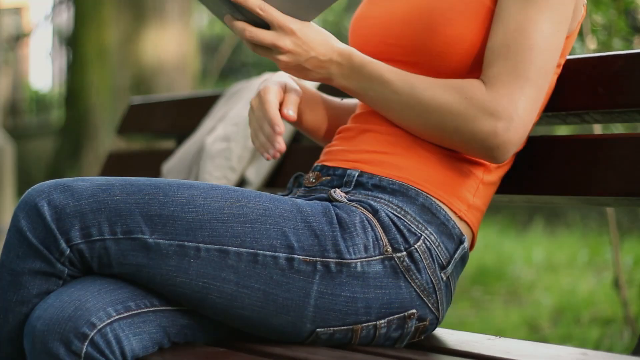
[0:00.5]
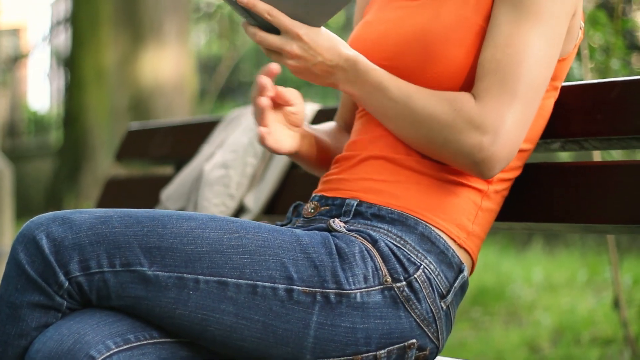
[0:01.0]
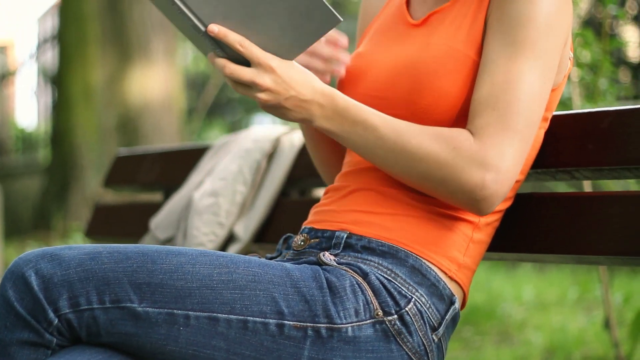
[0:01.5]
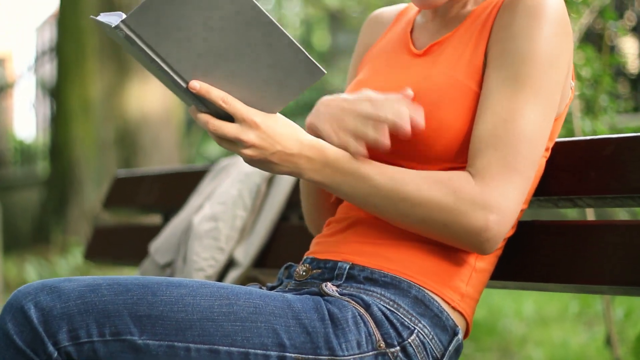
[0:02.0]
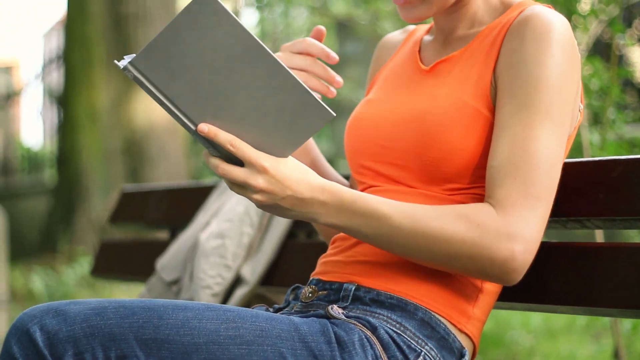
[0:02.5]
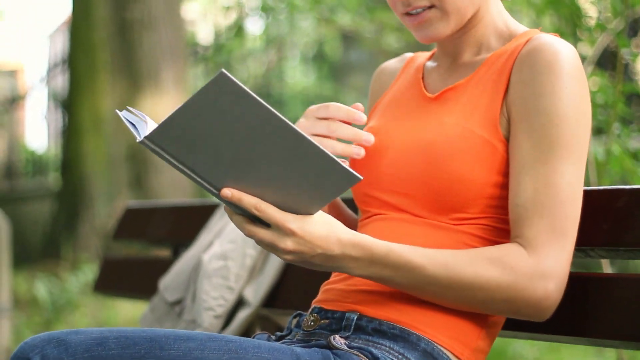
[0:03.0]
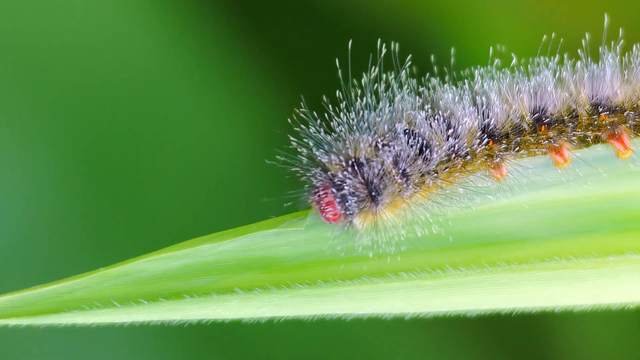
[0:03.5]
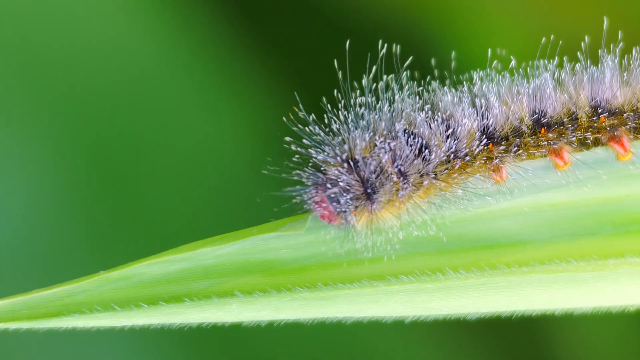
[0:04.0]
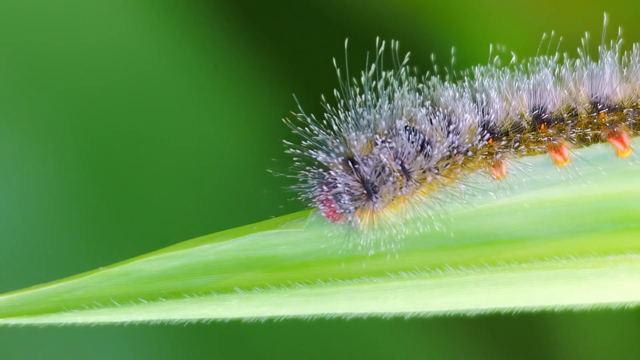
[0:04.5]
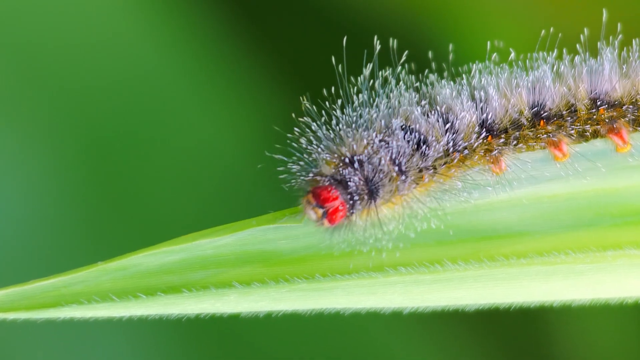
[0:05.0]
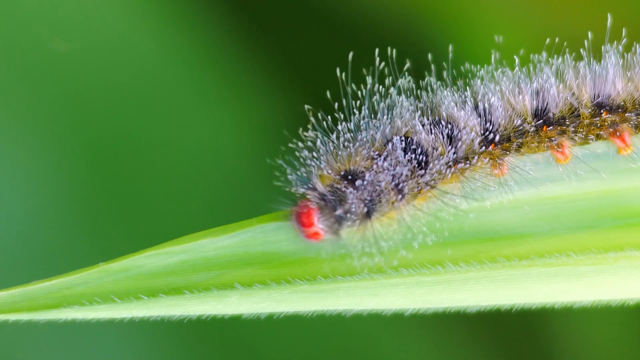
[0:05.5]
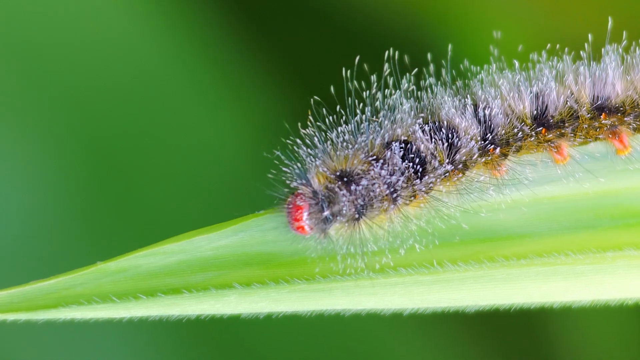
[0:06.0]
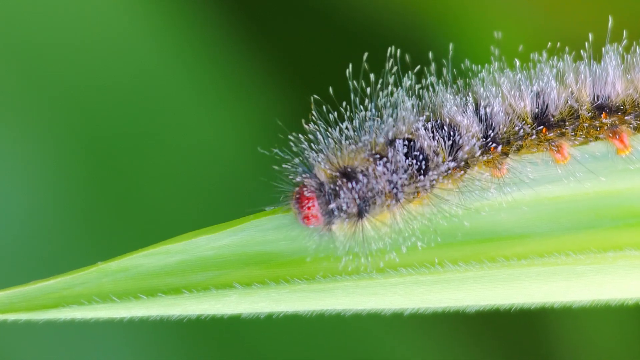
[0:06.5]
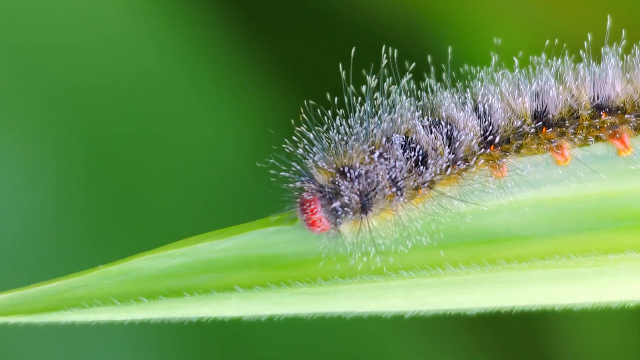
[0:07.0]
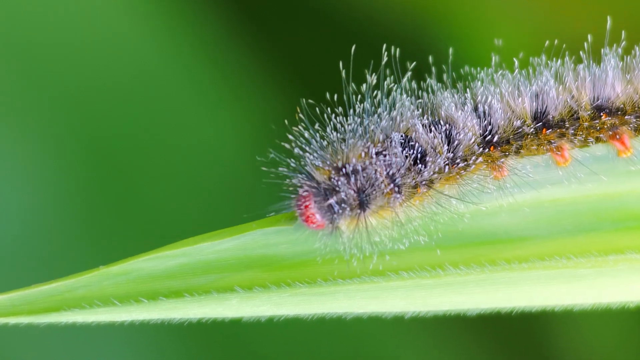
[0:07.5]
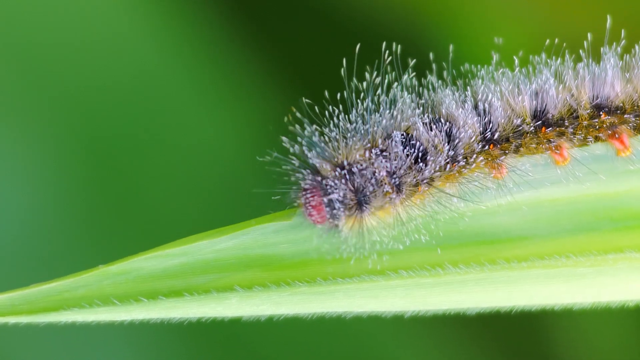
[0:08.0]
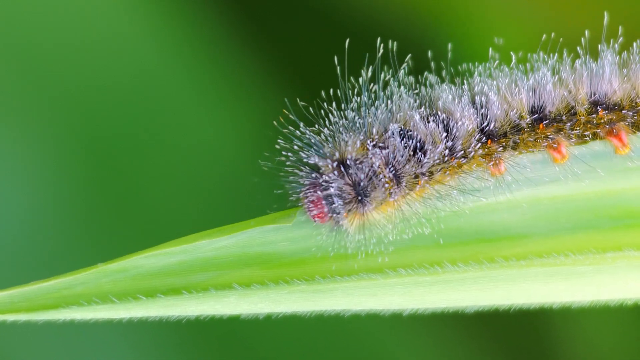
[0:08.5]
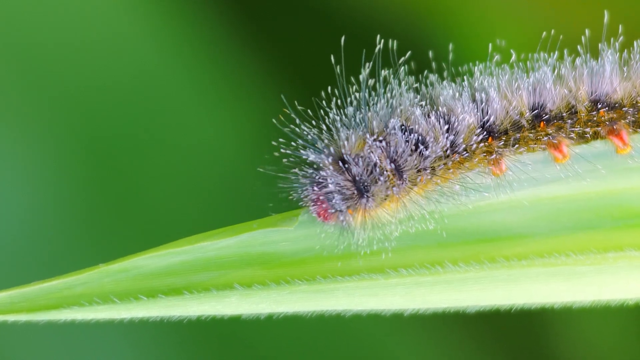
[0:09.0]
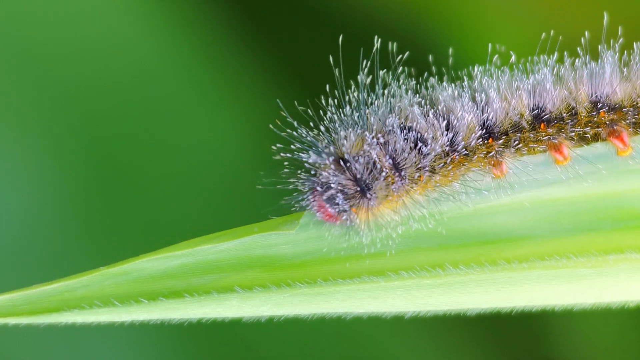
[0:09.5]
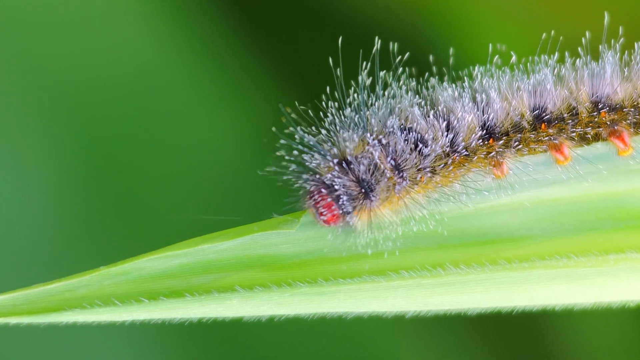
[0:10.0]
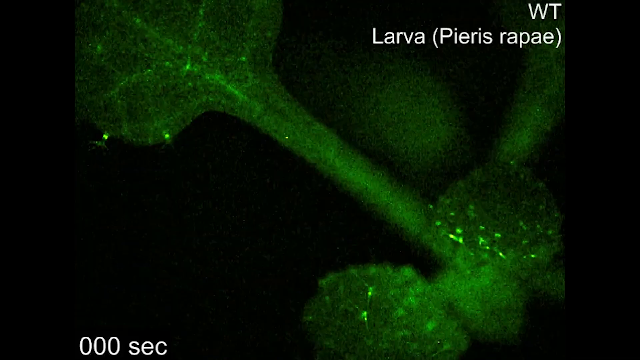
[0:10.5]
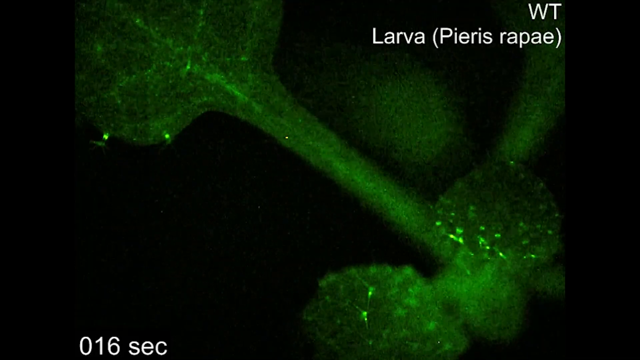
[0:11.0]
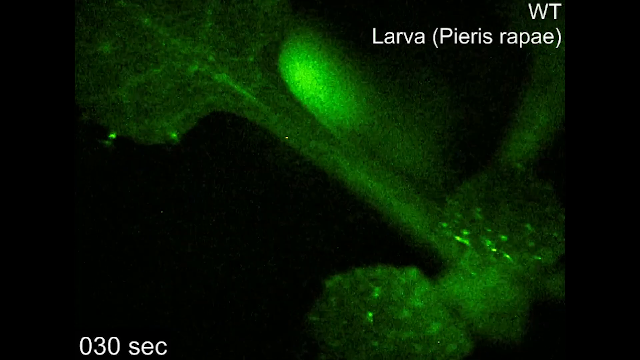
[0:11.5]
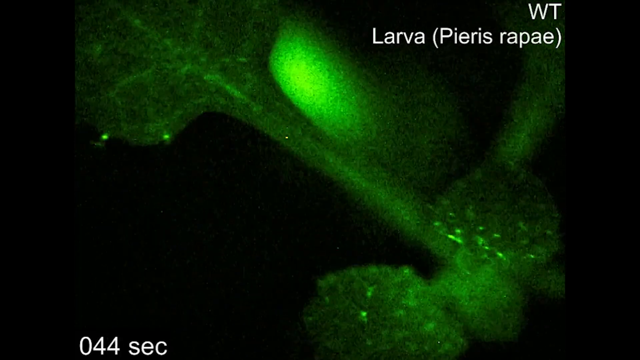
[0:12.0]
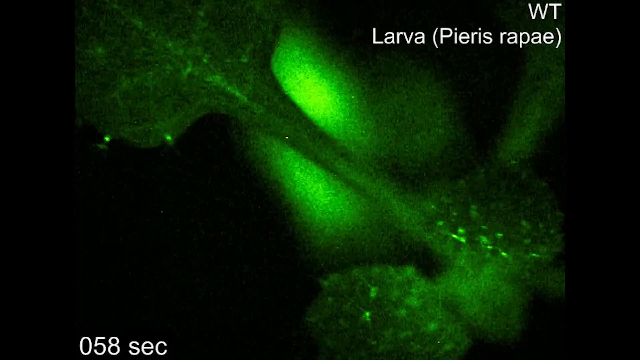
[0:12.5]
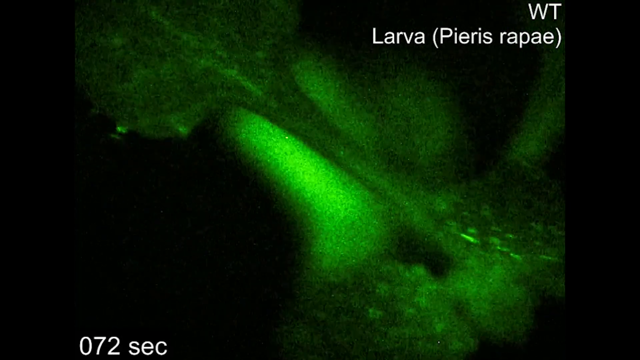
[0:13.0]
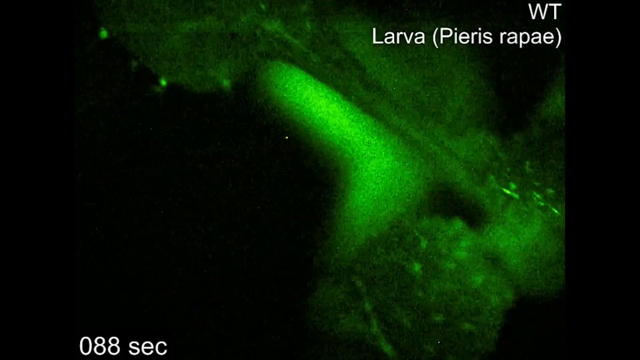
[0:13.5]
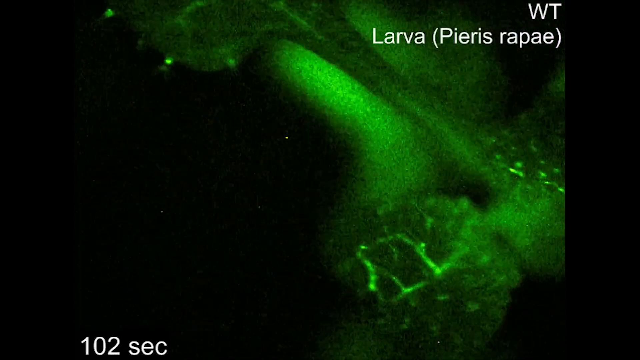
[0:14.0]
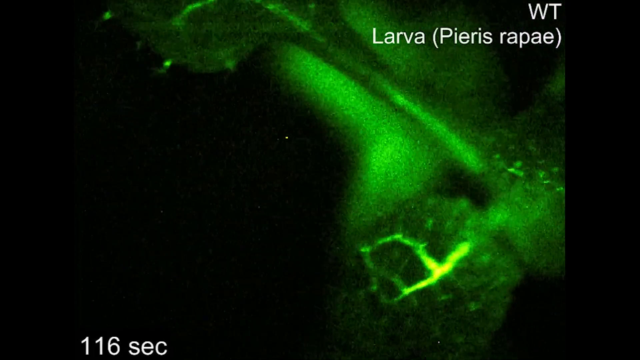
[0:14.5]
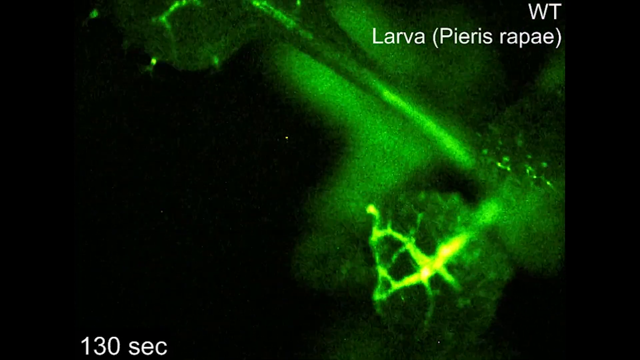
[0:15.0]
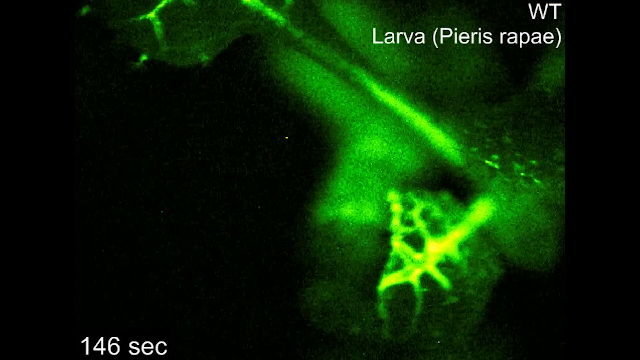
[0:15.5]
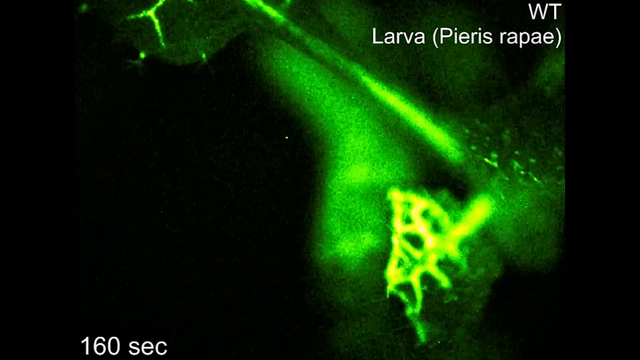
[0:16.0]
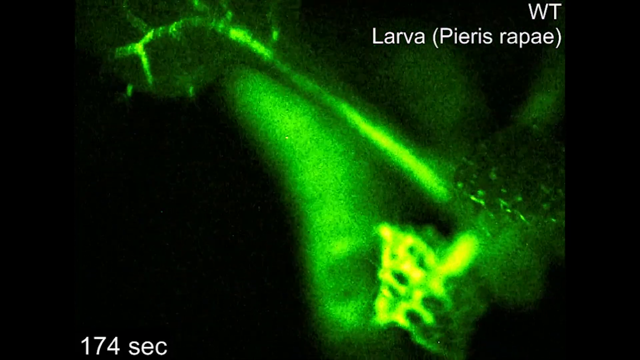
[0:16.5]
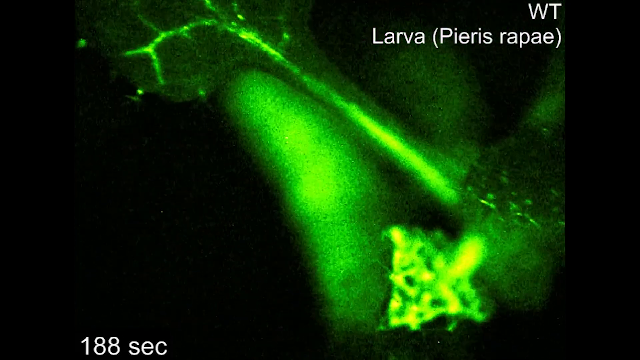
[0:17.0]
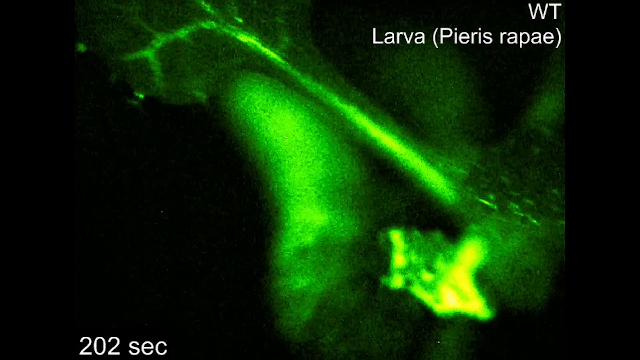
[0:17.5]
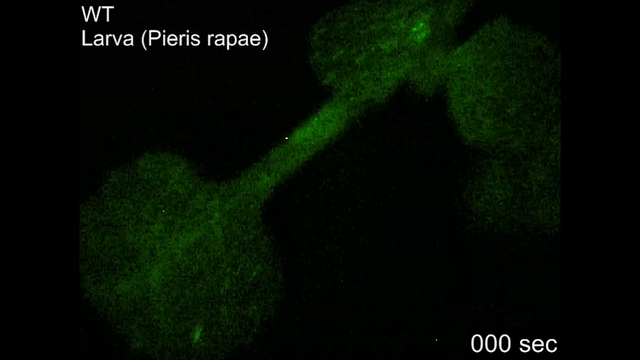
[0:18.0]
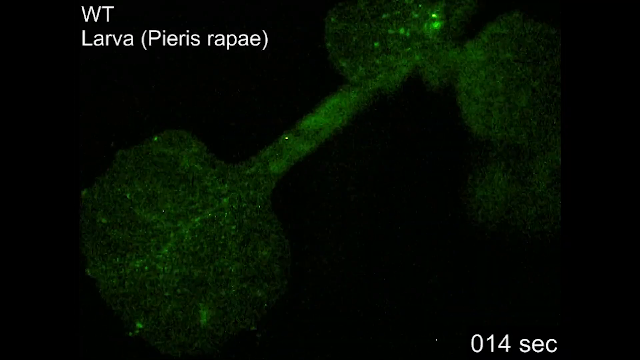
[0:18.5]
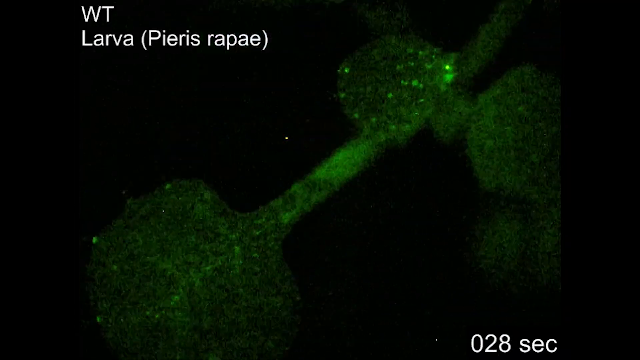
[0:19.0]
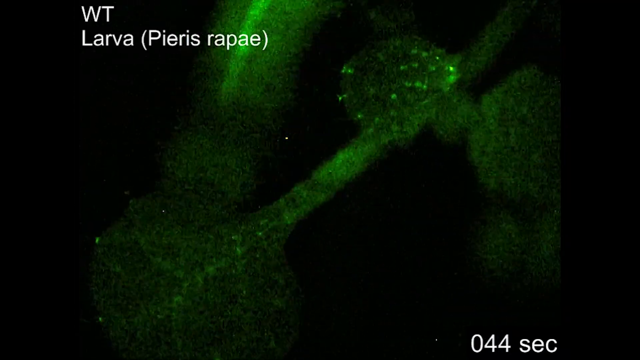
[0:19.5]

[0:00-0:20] The video features a woman, a caterpillar, and what appears to be a caterpillar larva. The woman has an athletic build and wears an orange tank top and blue jeans; she scratches her arm. The caterpillar is grey, blue, orange, and red, and is very fuzzy and furry; it is on a leaf, eating it. The larva, depicted using a night vision microscope, is also on a leaf, eating it. There is one woman, one caterpillar, and one larva. The shots move from the woman scratching her arm, to the caterpillar on a leaf, to the larva on a leaf.